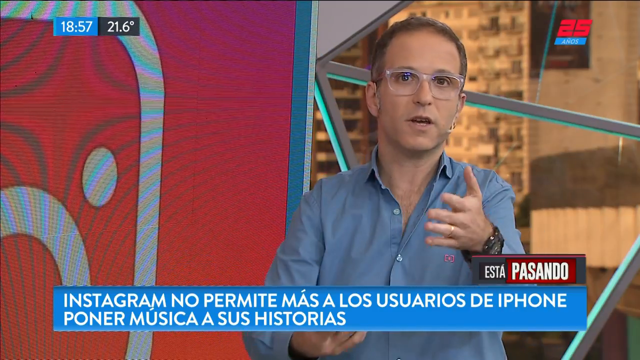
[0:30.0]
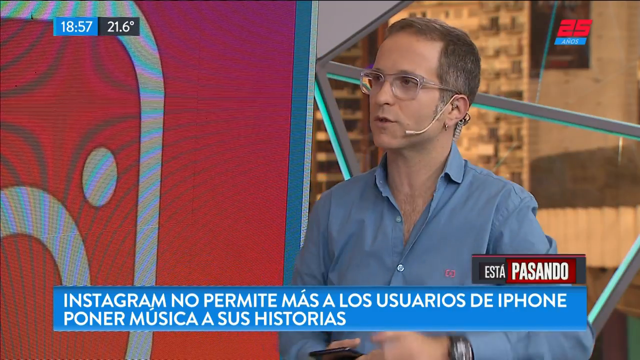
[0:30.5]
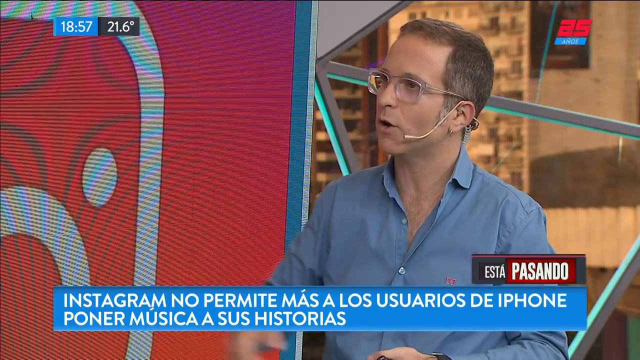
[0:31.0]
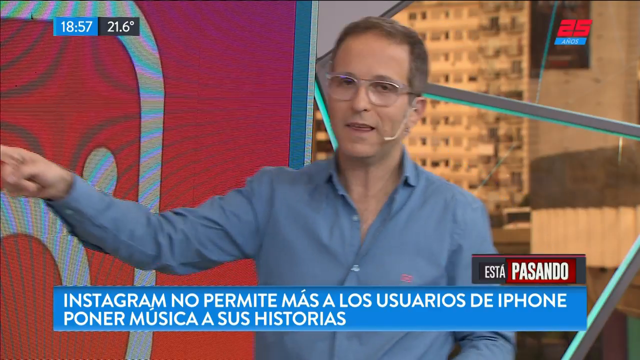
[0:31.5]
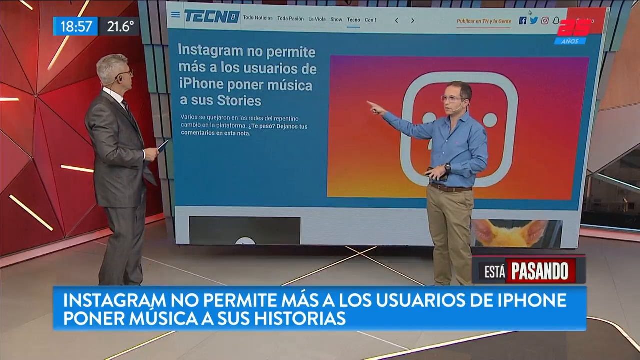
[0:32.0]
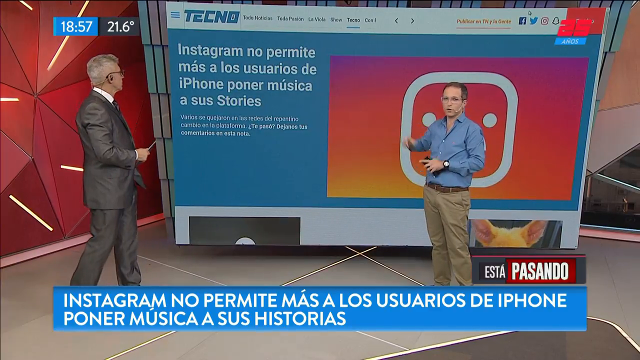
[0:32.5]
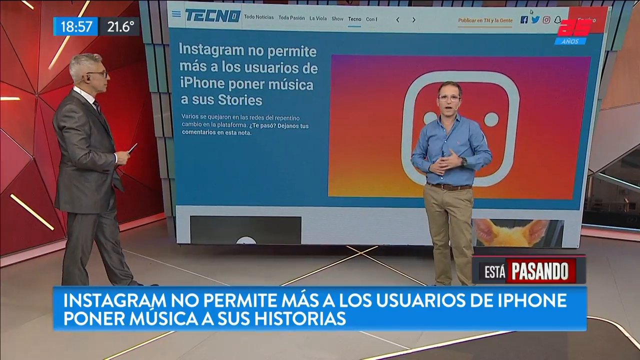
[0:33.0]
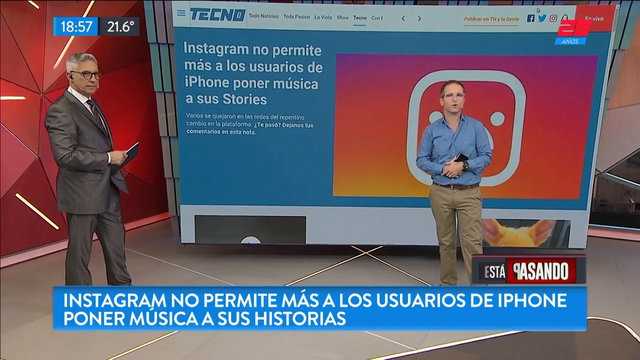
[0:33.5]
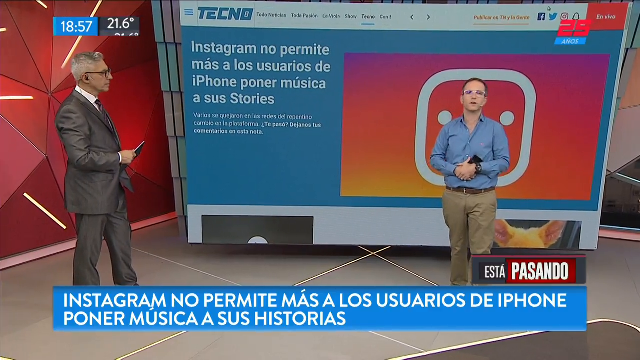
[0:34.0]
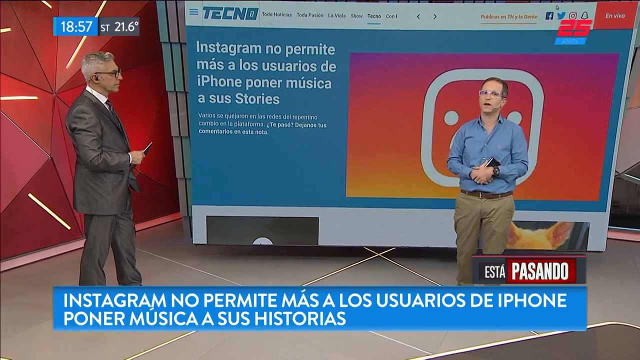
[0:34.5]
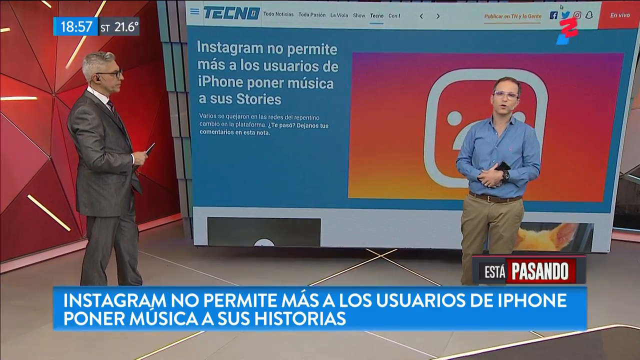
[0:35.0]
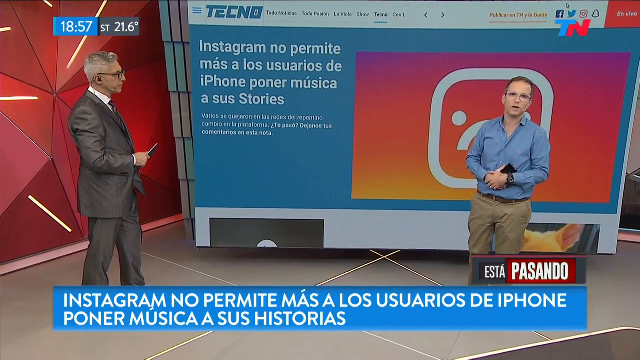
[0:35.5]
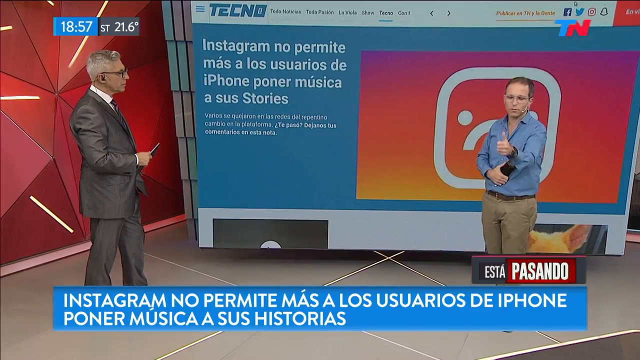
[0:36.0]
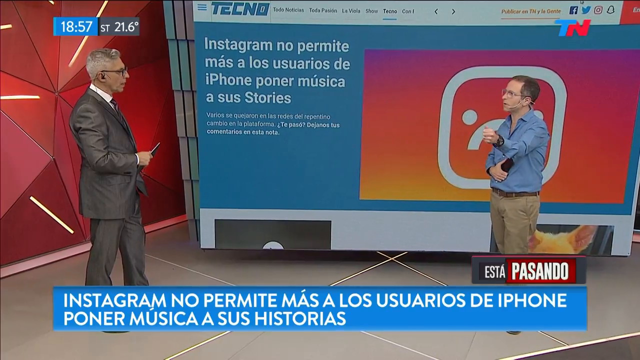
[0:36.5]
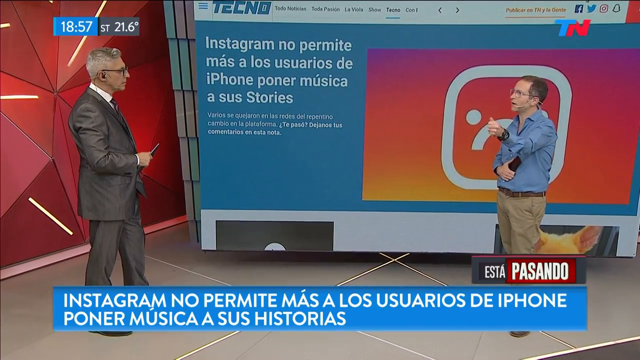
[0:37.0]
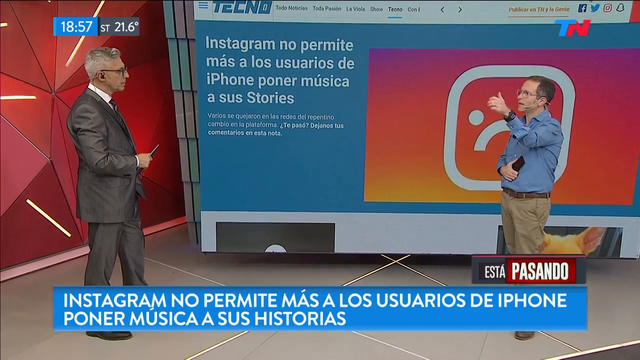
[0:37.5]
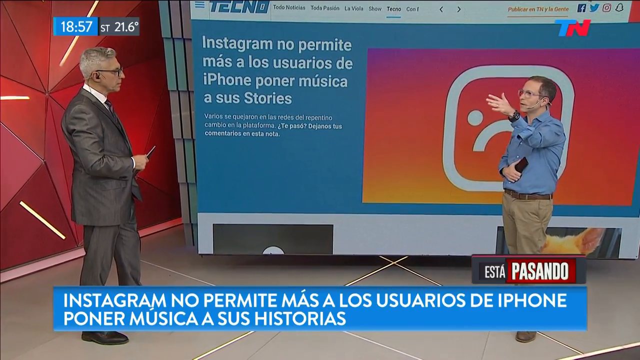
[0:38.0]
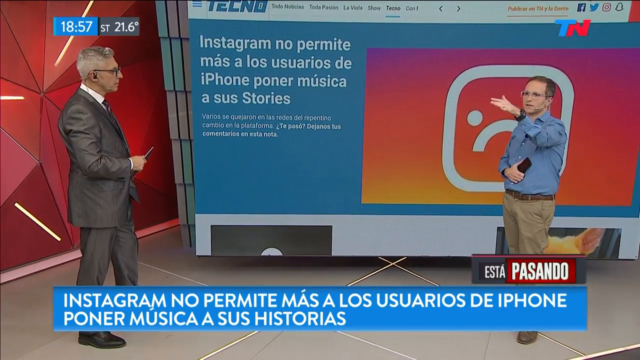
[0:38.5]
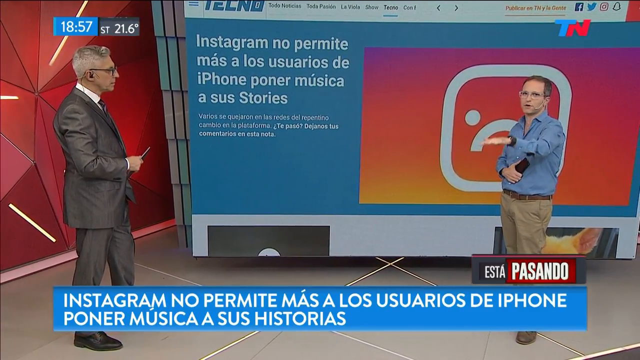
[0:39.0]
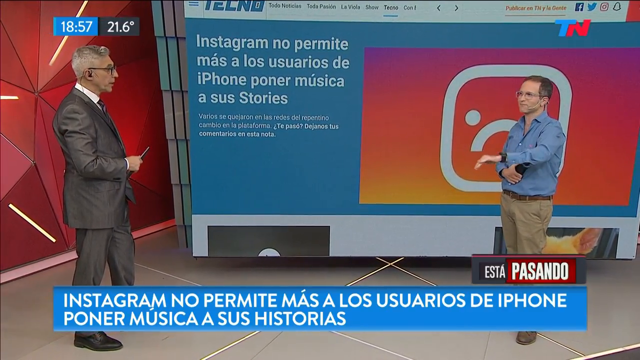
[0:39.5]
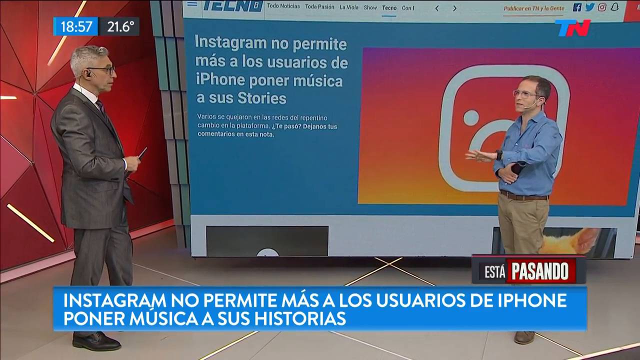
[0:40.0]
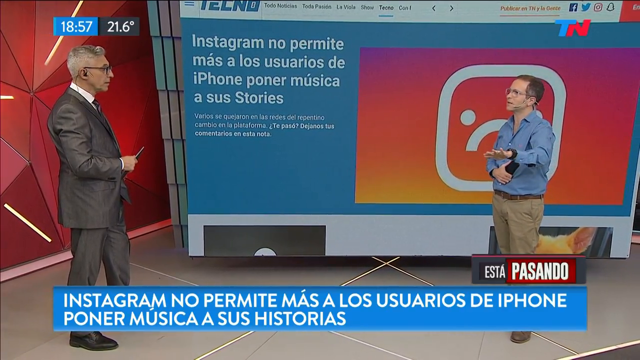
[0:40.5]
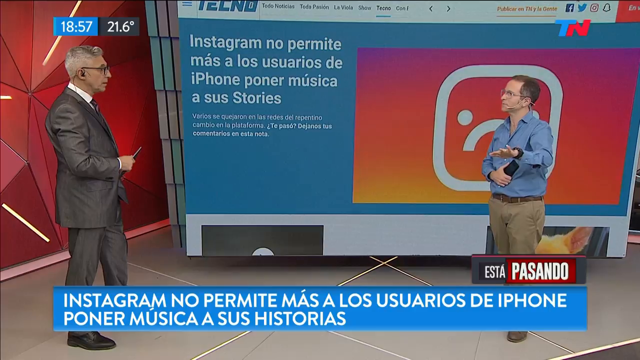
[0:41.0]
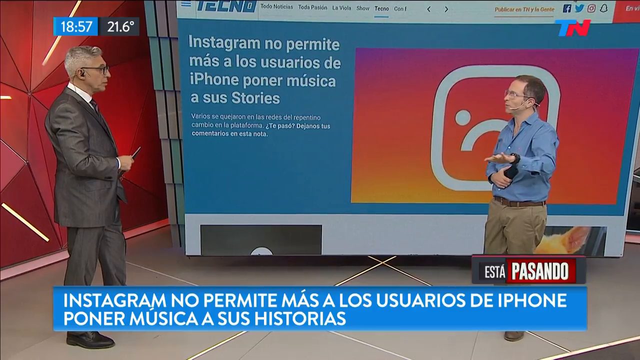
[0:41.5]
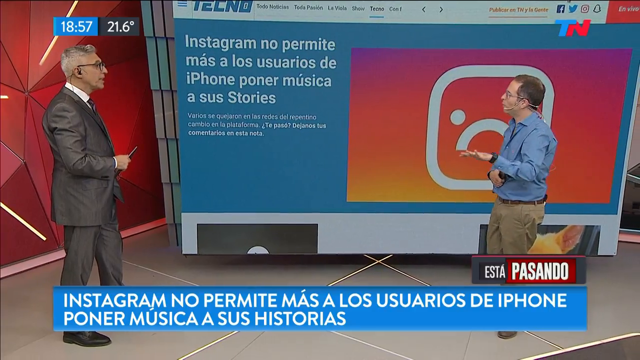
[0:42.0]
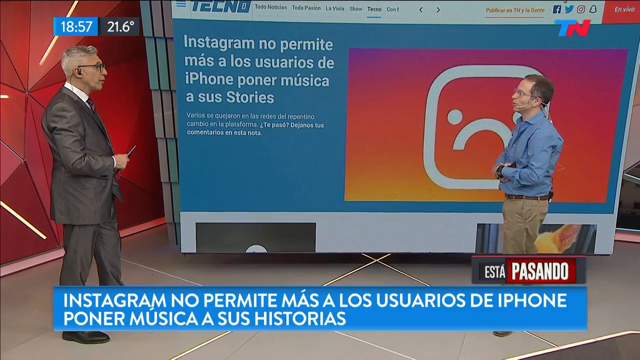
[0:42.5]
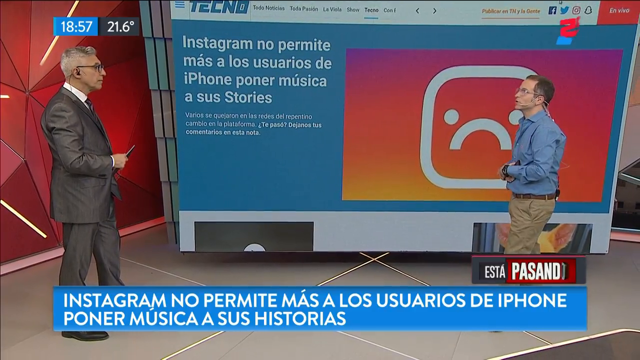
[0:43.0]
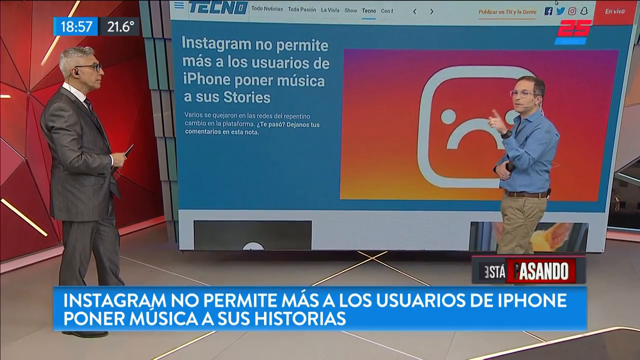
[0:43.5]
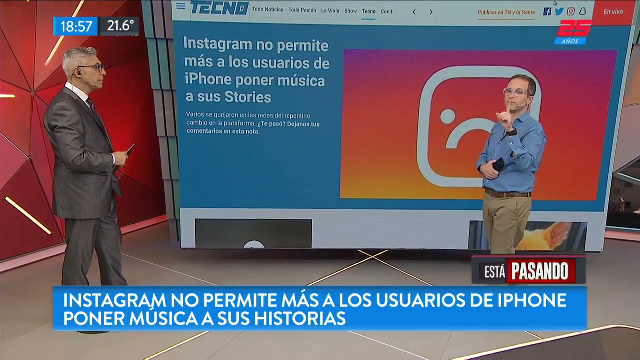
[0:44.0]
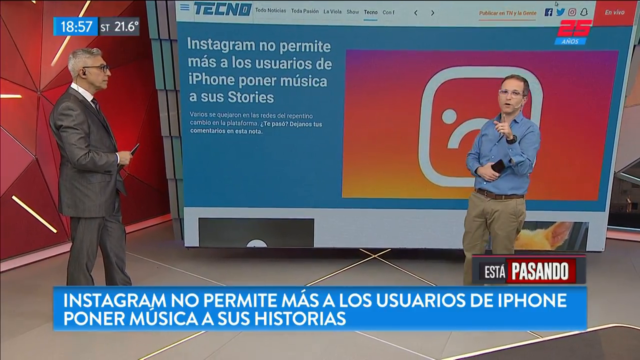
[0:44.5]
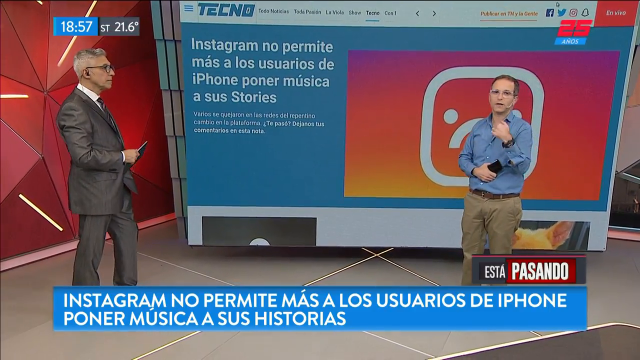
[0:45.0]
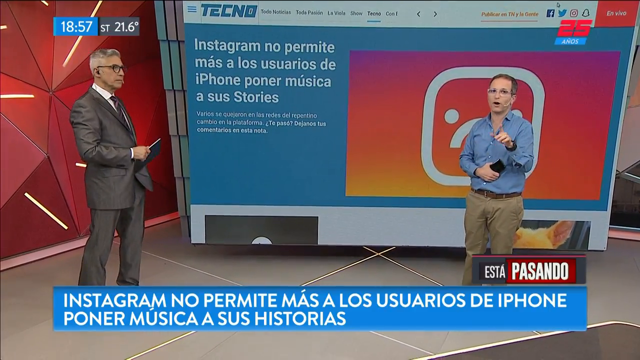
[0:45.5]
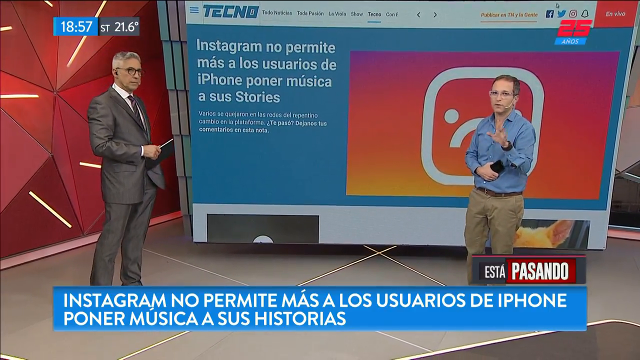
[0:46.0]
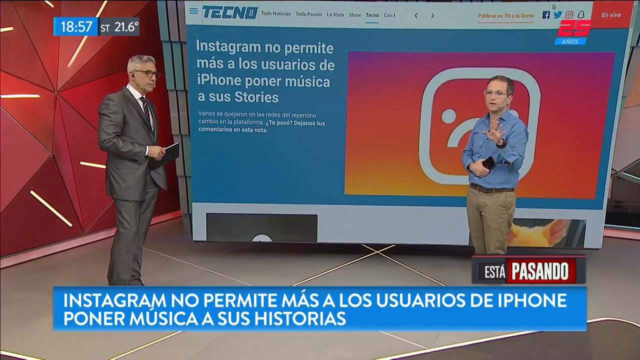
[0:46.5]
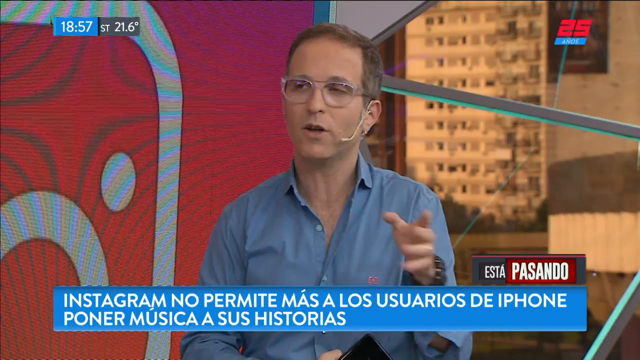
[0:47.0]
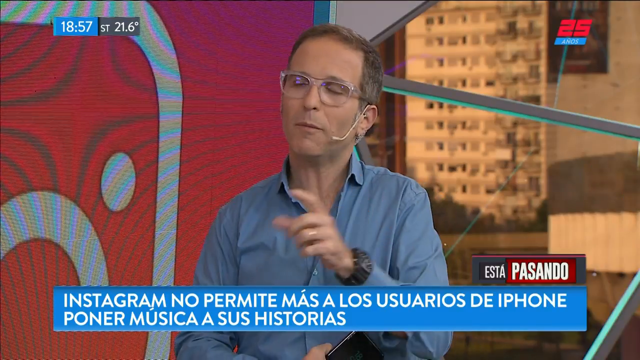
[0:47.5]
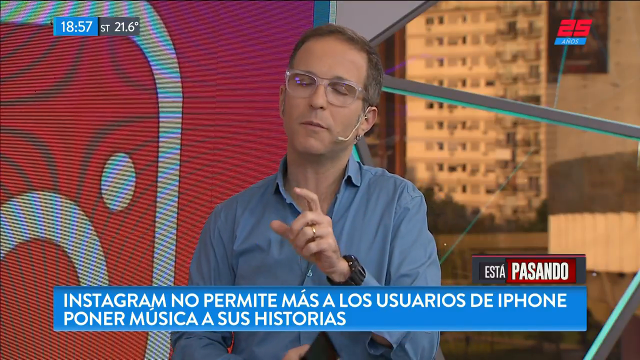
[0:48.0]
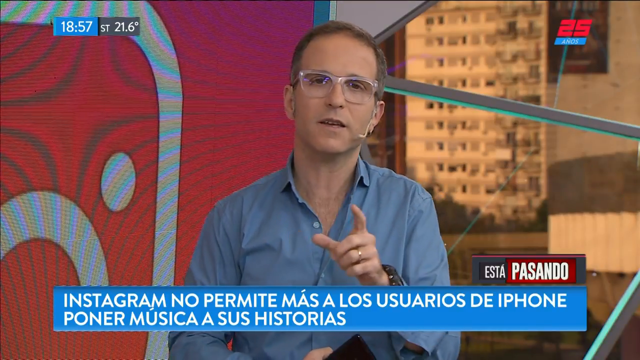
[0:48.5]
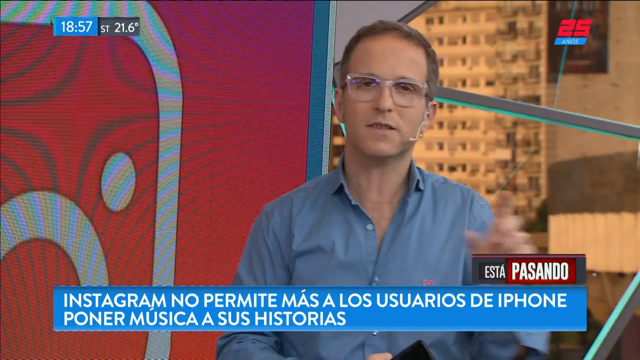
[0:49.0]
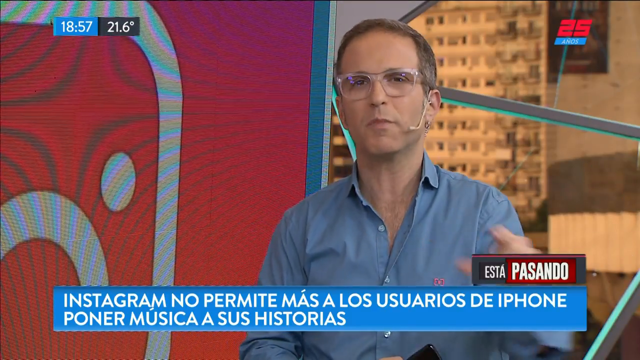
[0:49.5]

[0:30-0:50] A close-up shows a man in a blue button-down shirt and khaki pants with a black phone, talking about the story of Instagram not allowing iPhone users to put music in their stories. The Spanish words stay at the bottom of the screen the whole time. The camera zooms back out to show the wider picture, including the Instagram logo turned into a frowny face. For a few seconds it shows what looks like a news anchor in a suit on the left, holding some cards; he seems to be the host of the program, while the man in the blue shirt seems to be a guest expert. The studio has a gray floor and some red walls. The top right appears to show "25 TN"; TN is possibly Tennessee and 25 possibly a channel number, suggesting a Spanish-language television station.